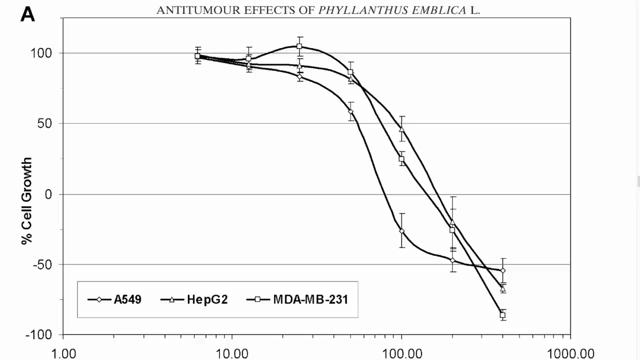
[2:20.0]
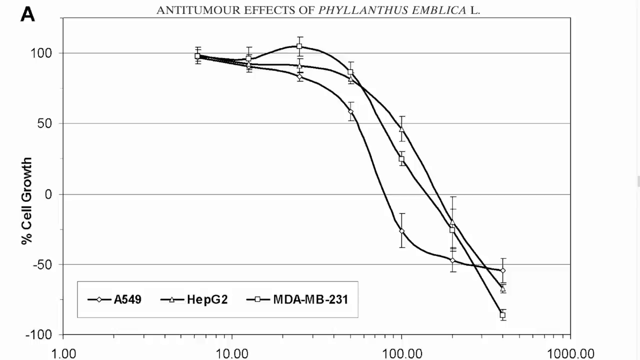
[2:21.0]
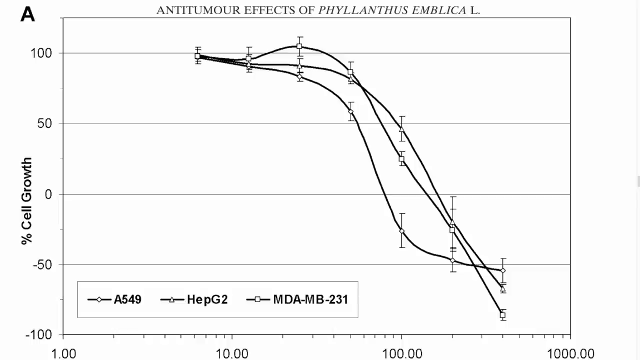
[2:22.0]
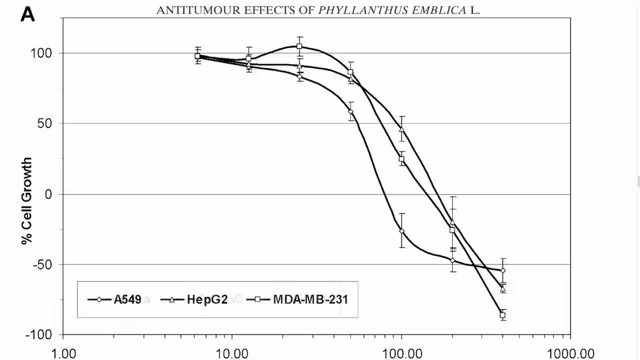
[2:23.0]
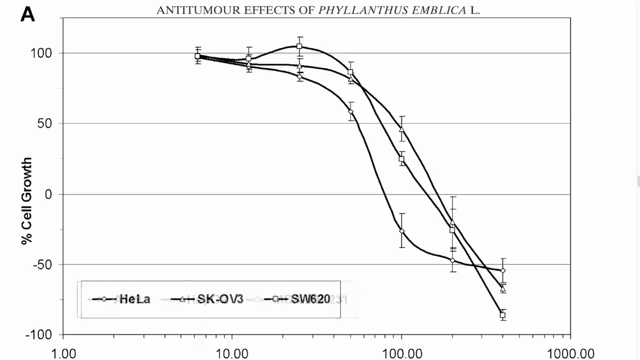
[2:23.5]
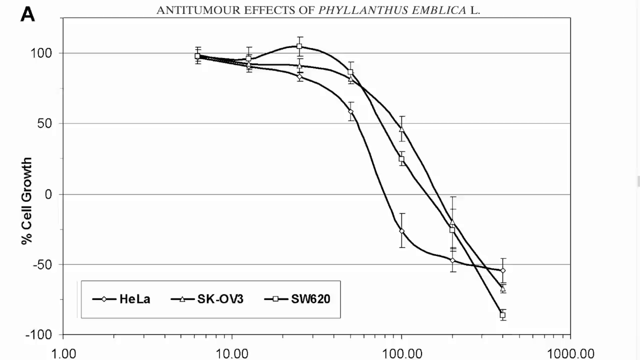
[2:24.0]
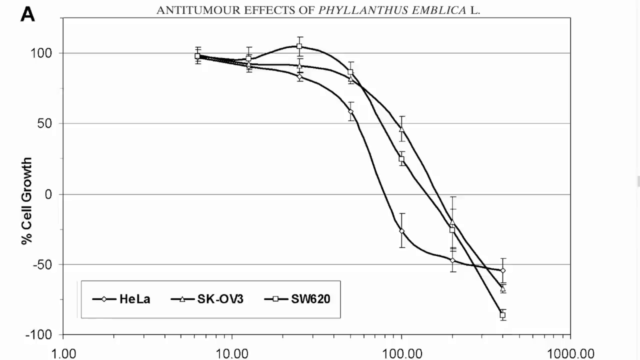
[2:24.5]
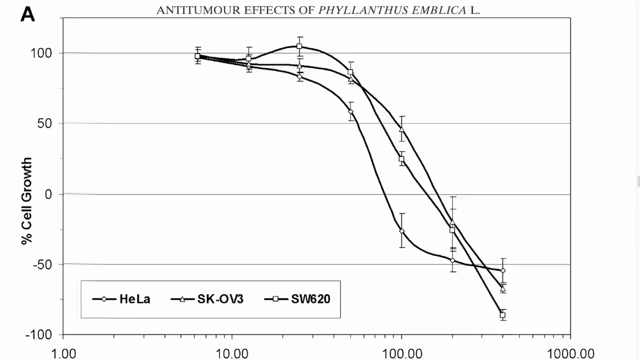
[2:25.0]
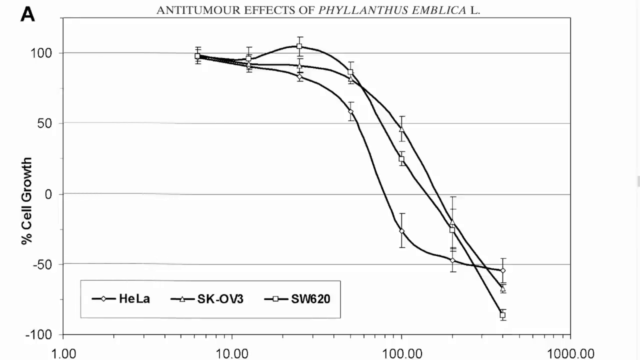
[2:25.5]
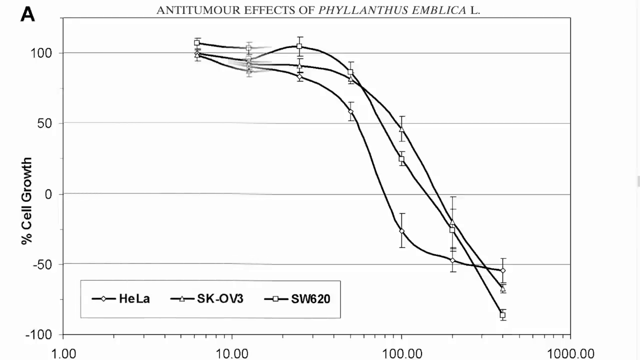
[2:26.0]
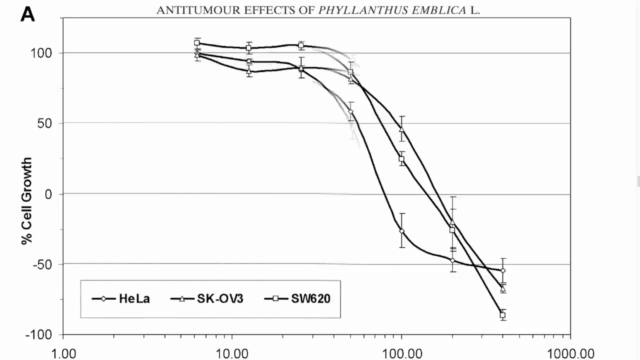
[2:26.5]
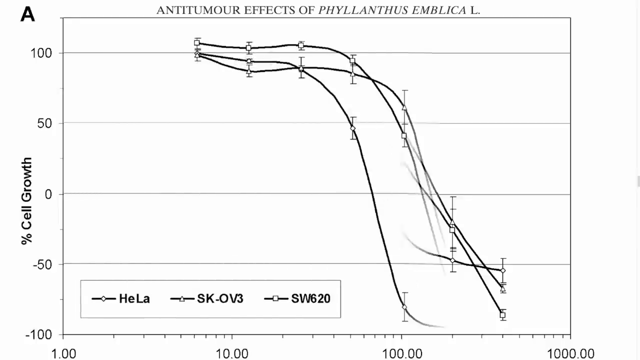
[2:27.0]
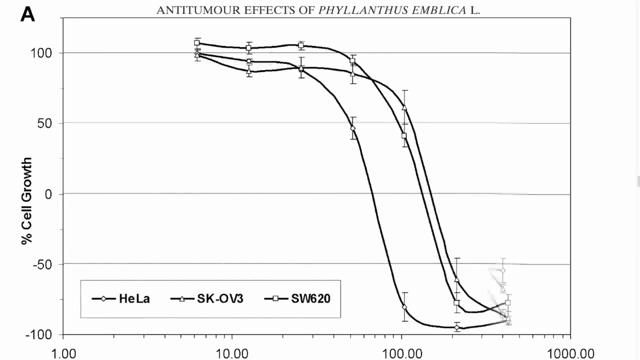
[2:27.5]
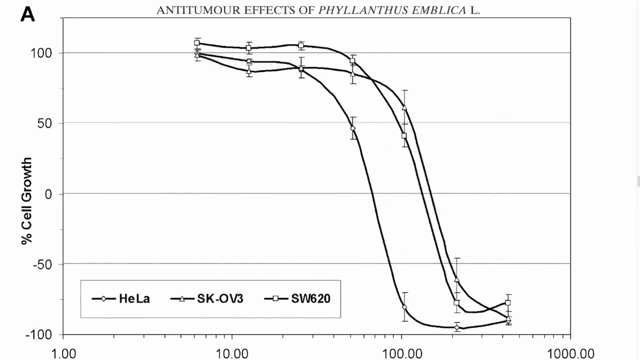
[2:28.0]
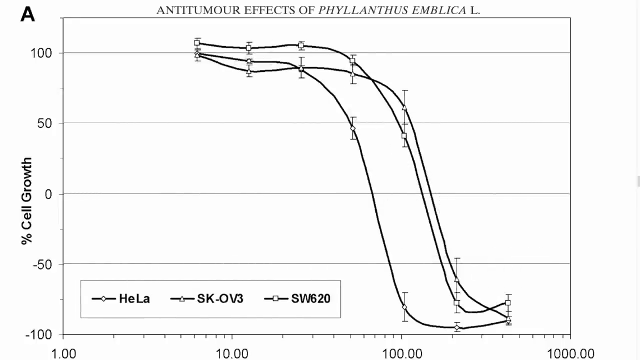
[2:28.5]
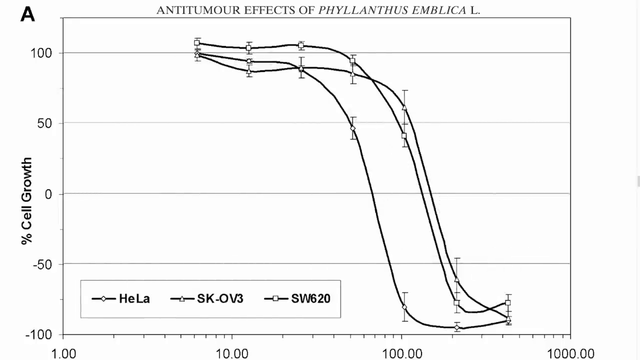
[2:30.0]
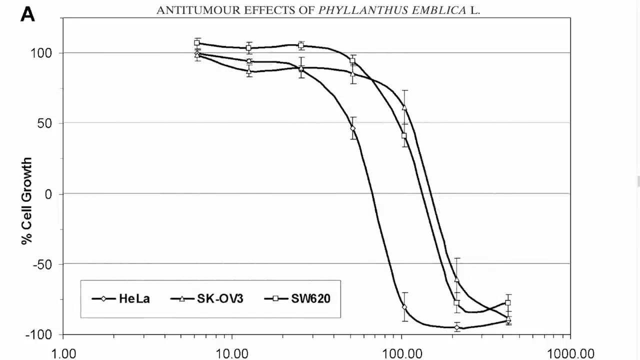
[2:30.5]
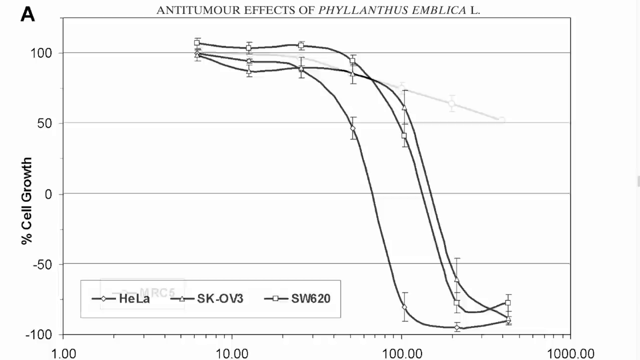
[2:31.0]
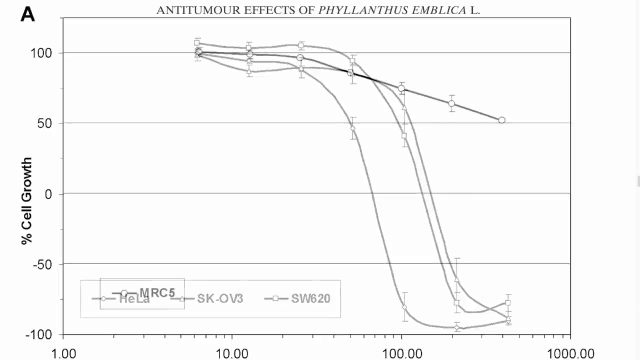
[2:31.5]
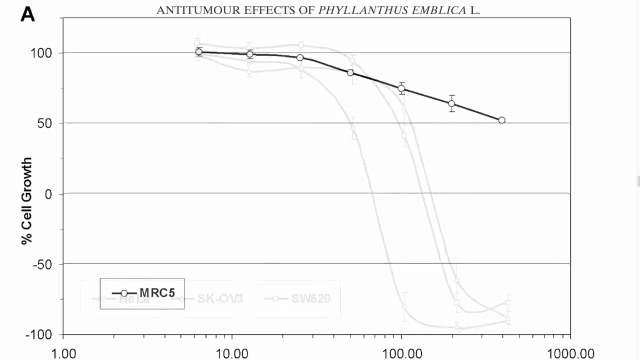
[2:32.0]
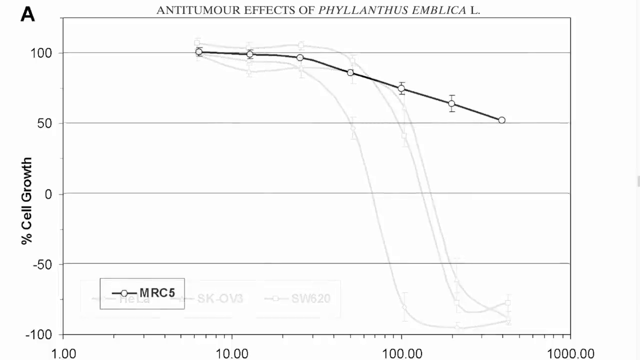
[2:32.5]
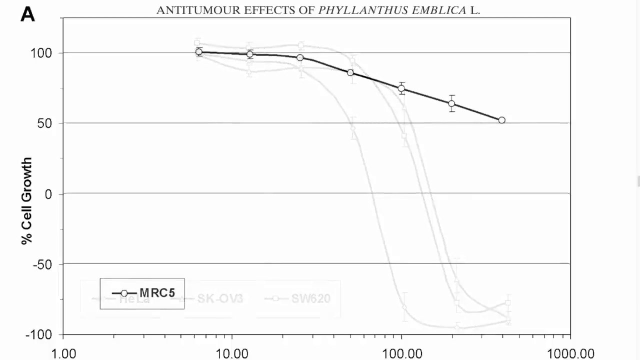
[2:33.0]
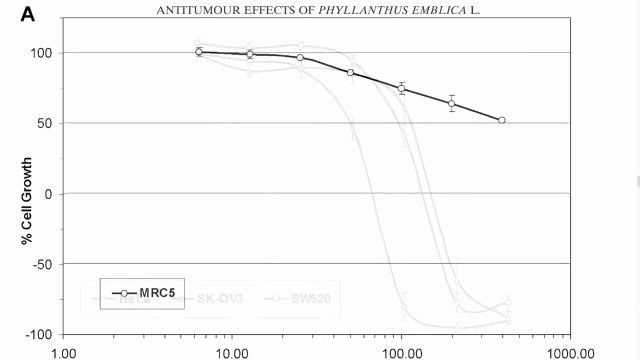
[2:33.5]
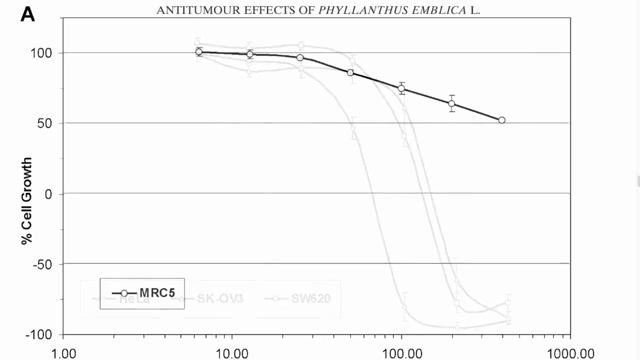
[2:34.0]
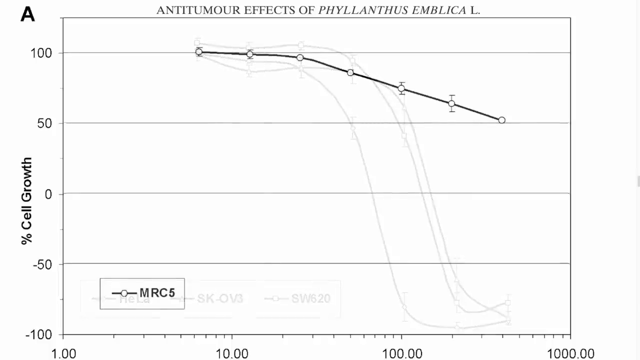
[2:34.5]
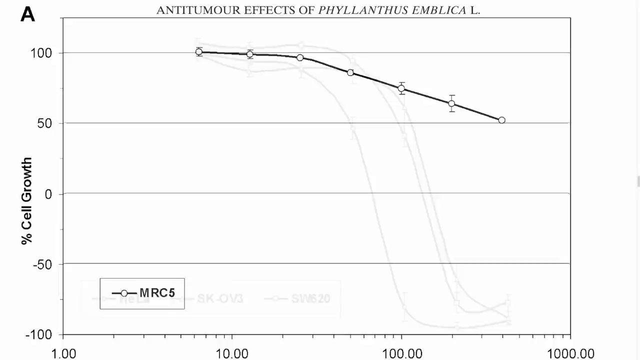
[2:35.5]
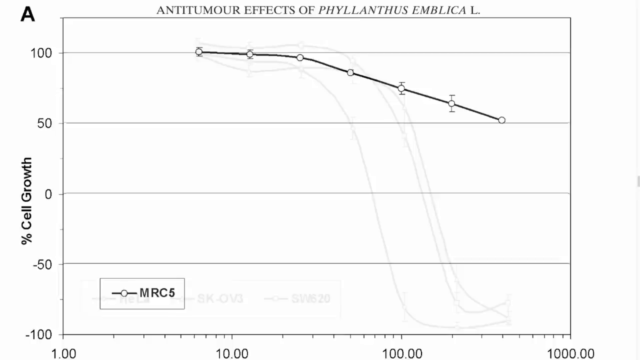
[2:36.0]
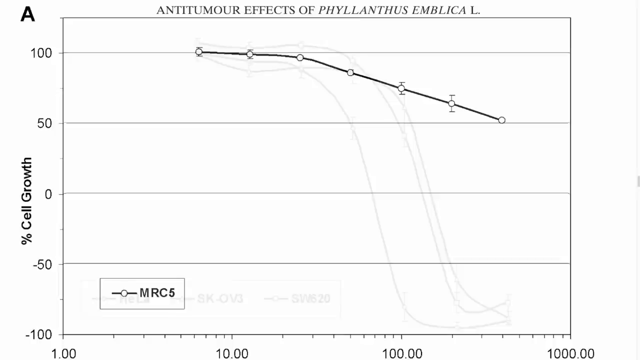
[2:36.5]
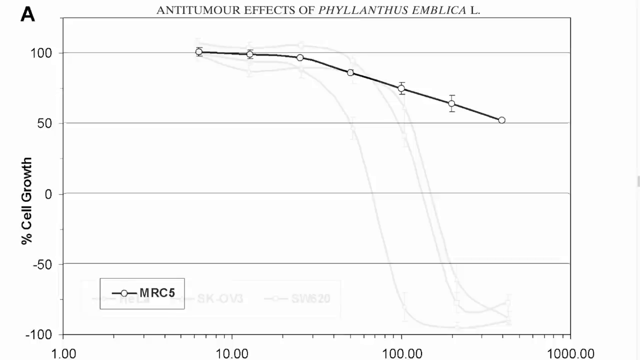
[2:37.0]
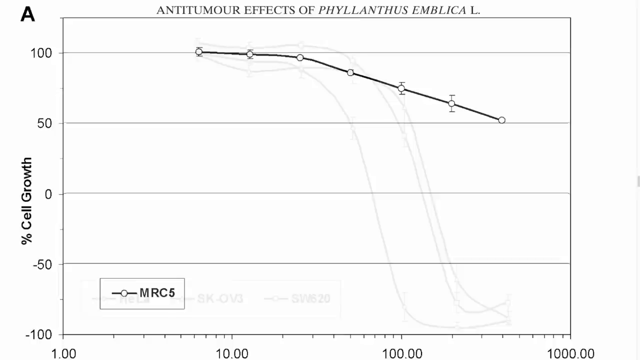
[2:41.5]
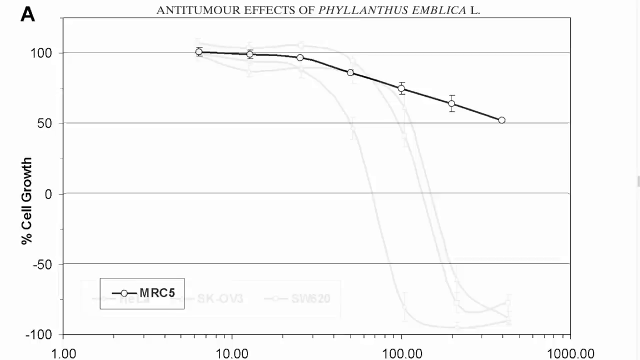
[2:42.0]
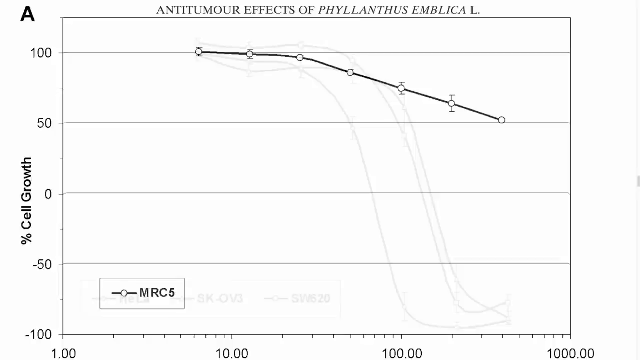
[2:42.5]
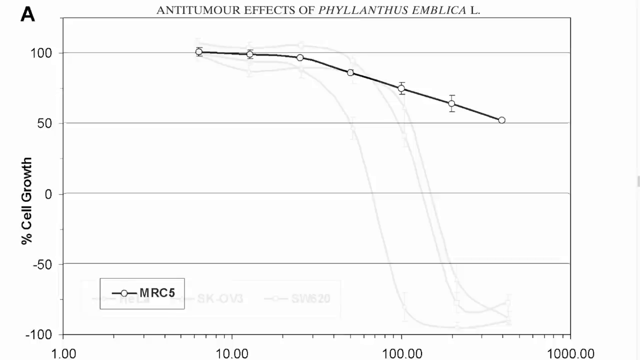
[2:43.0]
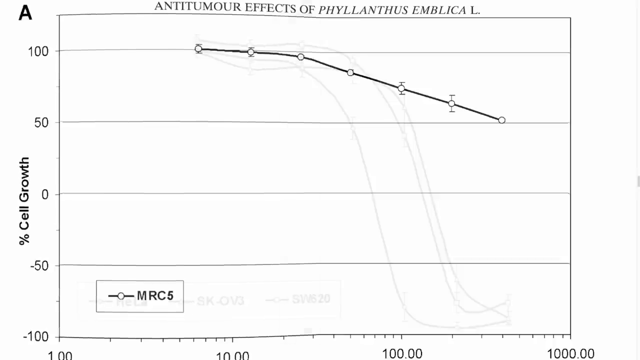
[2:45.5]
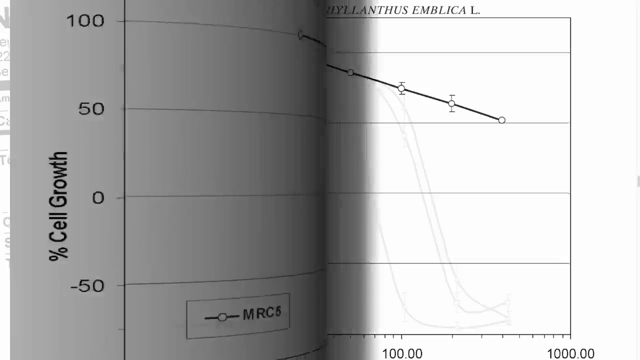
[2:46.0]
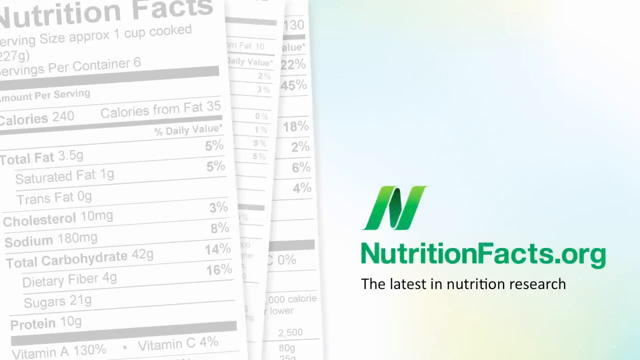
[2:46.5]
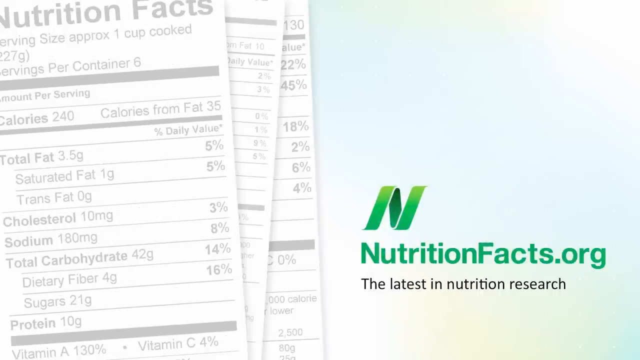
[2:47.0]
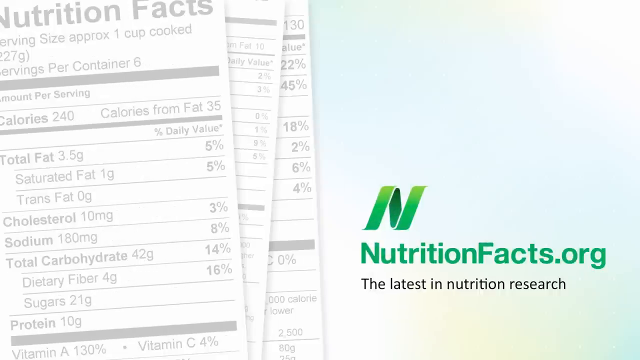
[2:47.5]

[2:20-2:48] The chart of the anti-tumor effects of phyllanthus emblica L shows three lines: a circle marker for A549, a triangle marker for HepG2 and a square marker for MDA-MB-231. The lines all start at the same point, toward the top 100% cell growth mark and around 8.00 on the horizontal axis. They kind of move together horizontally for a bit before separating, with the square line at the highest percentage cell growth, the triangle line in the middle and the circle line lowest. At around the 80.00 horizontal point they slope downward almost vertically, and around the 800.00 point the circle line intercepts the other two and eventually has the highest percentage cell growth. Another chart then appears for HELA, SK-OV3 and SW620, whose lines follow a similar pattern, all moving in the same direction, though they seem to have a much deeper slope as percentage cell growth declines. These lines kind of fade a little, and a single straight line with circle markers, for MRC5, starts at the 100% cell growth, 9.00 mark, kind of moves horizontally until about the 40.00 mark, and then begins to slope slightly downward.